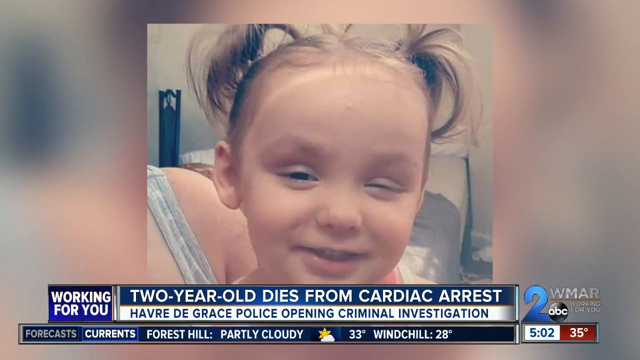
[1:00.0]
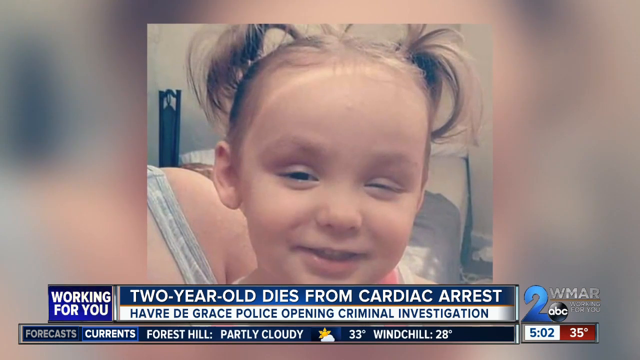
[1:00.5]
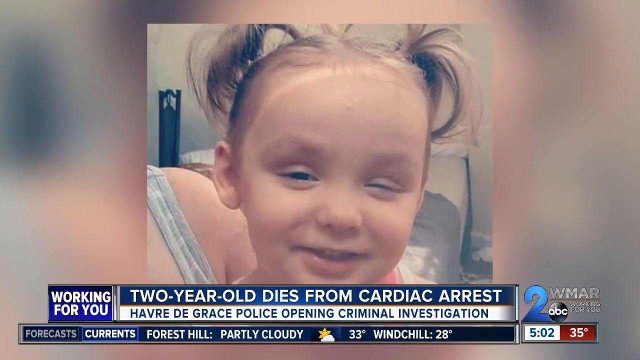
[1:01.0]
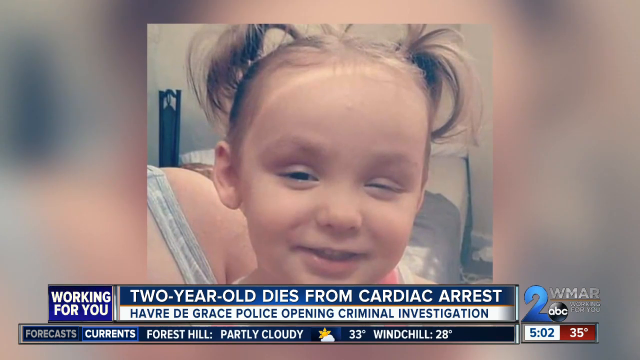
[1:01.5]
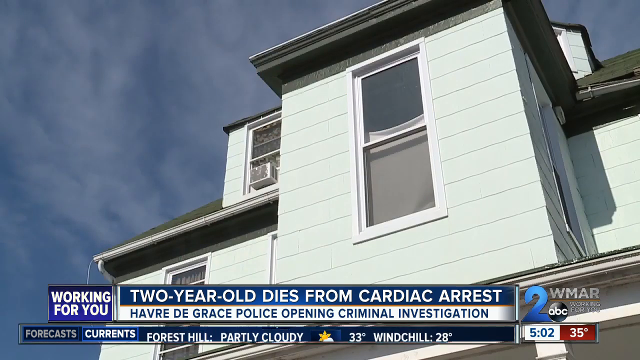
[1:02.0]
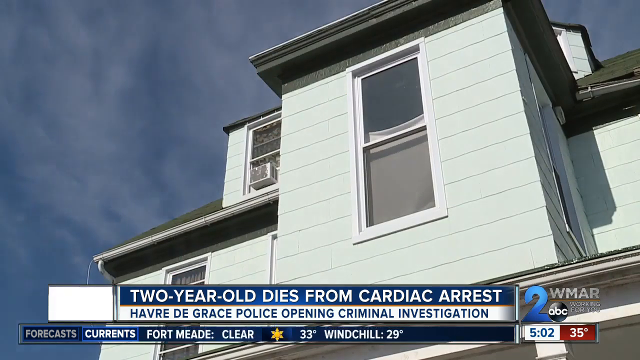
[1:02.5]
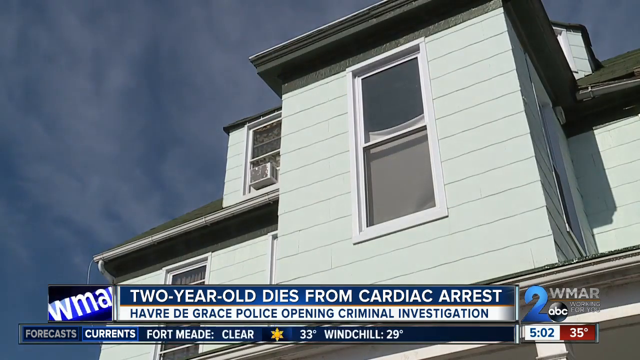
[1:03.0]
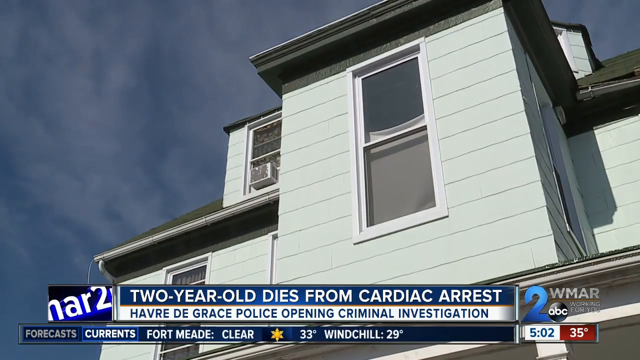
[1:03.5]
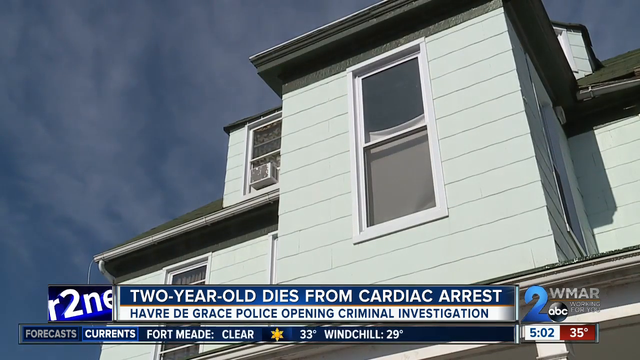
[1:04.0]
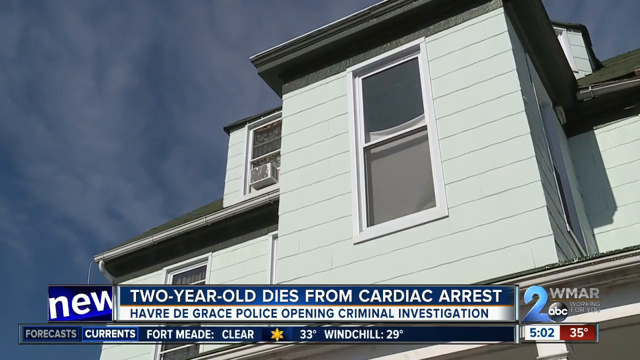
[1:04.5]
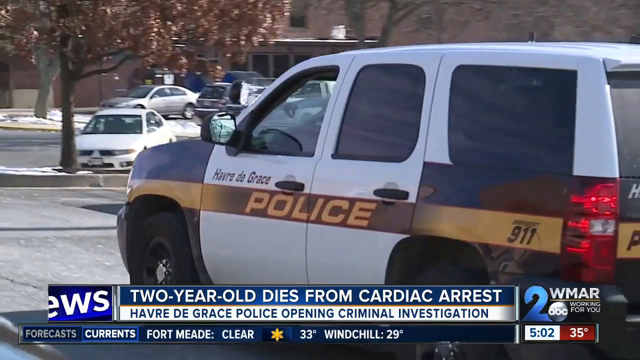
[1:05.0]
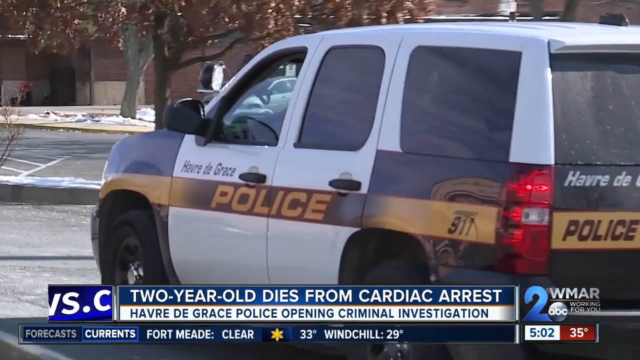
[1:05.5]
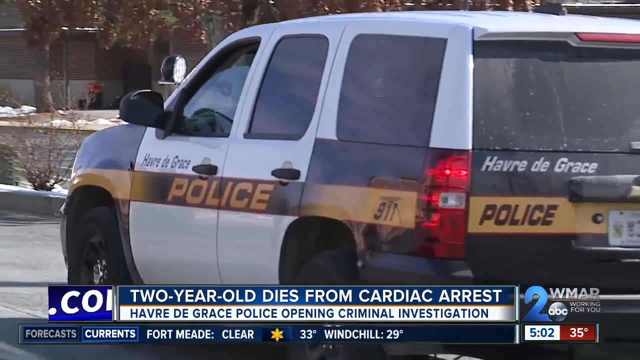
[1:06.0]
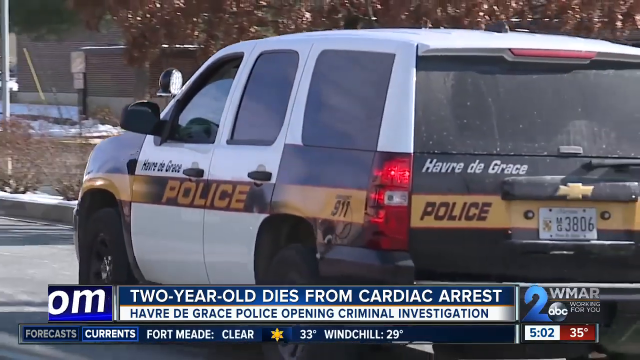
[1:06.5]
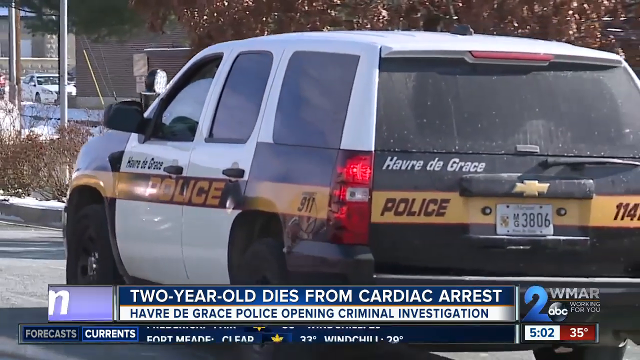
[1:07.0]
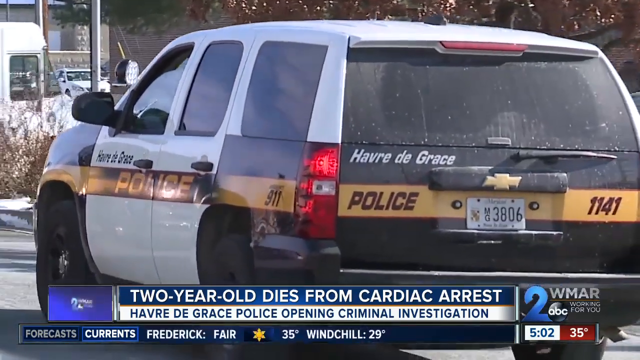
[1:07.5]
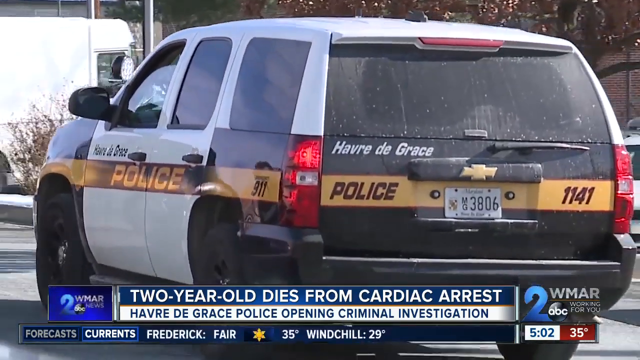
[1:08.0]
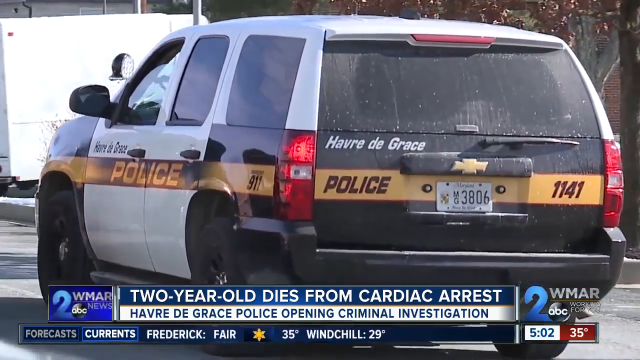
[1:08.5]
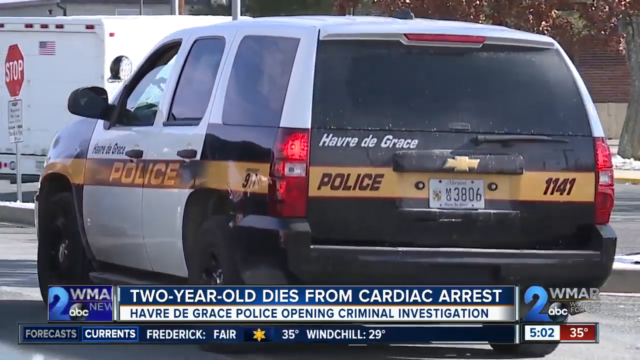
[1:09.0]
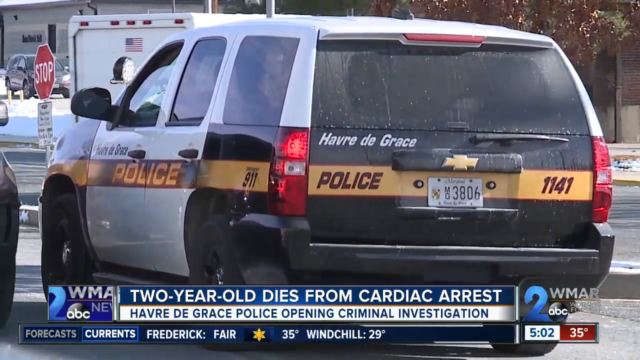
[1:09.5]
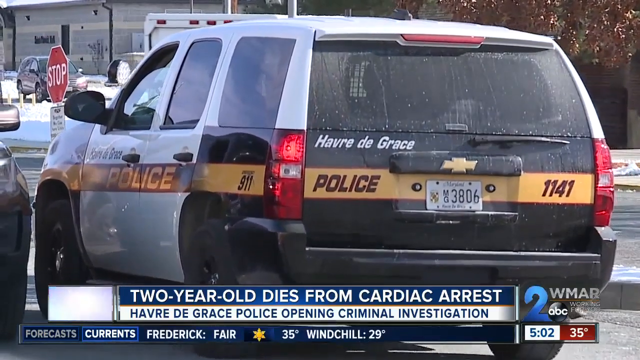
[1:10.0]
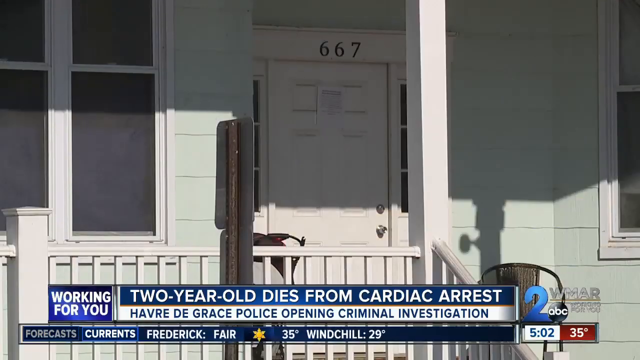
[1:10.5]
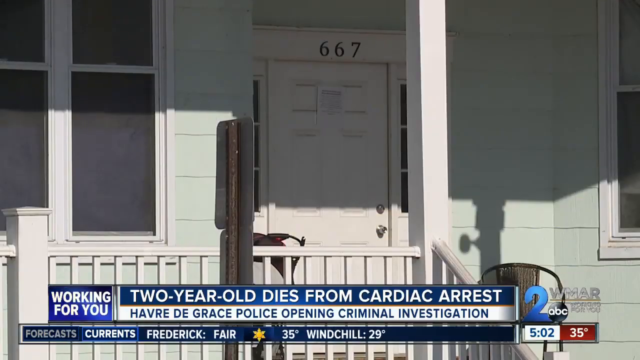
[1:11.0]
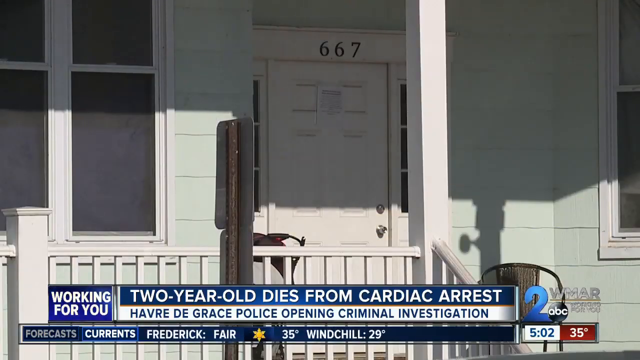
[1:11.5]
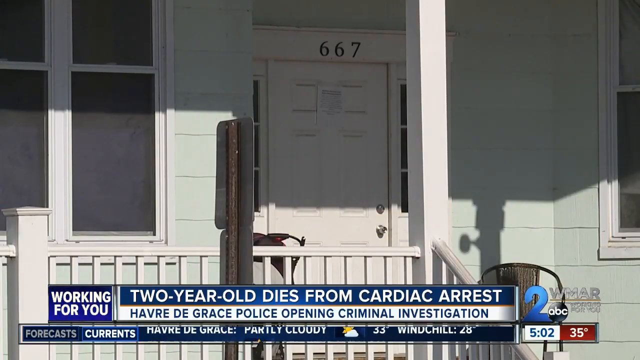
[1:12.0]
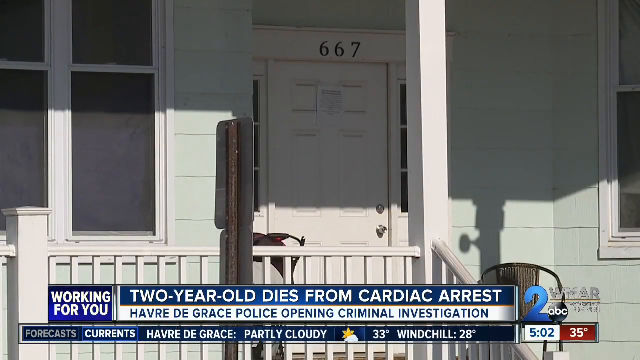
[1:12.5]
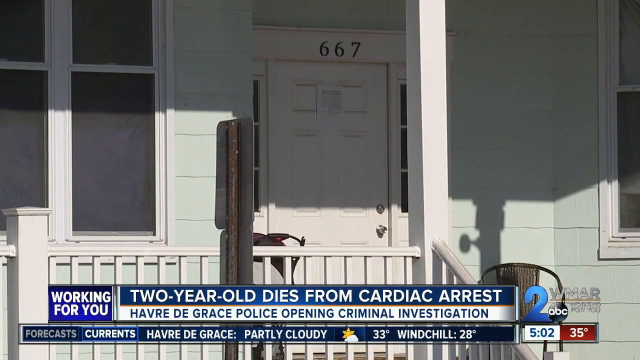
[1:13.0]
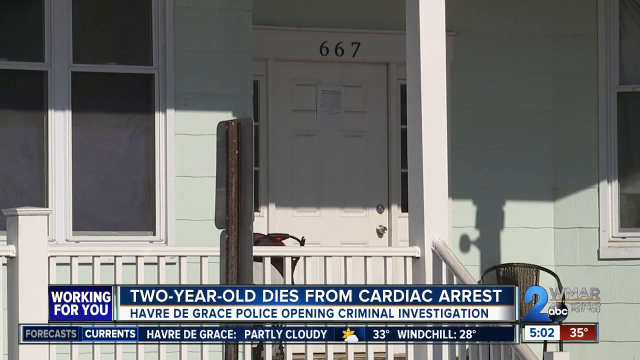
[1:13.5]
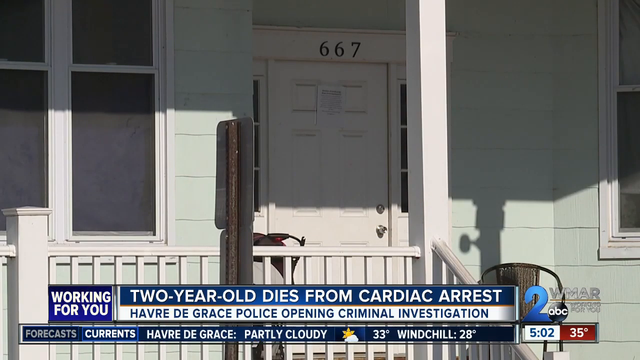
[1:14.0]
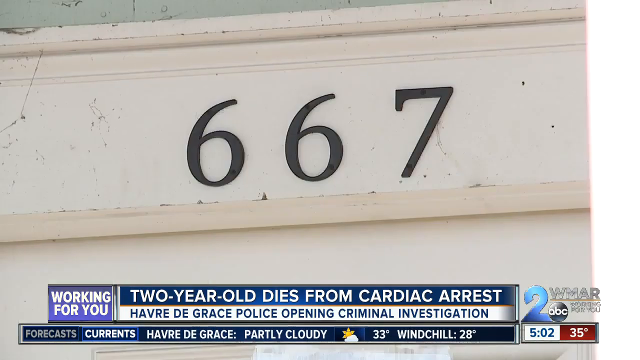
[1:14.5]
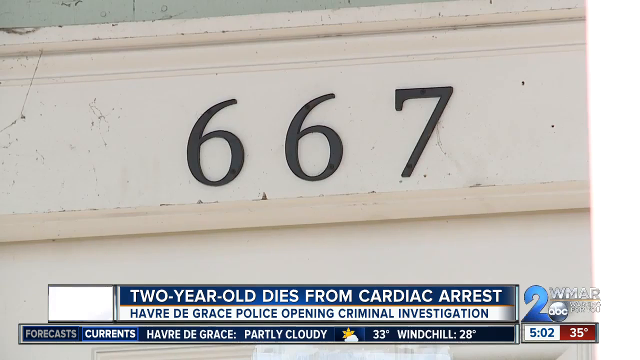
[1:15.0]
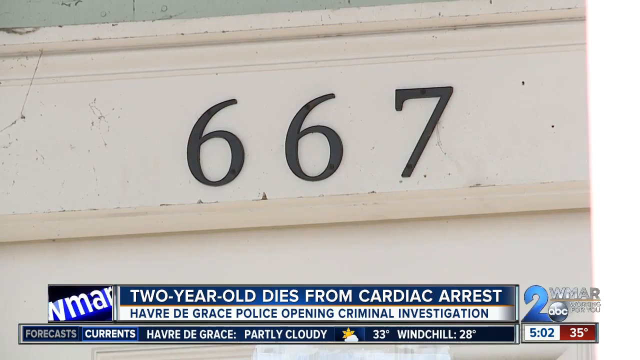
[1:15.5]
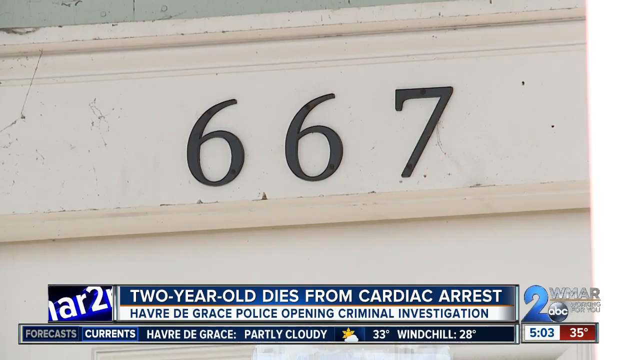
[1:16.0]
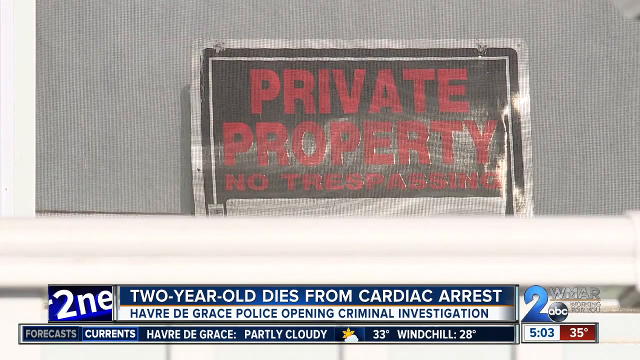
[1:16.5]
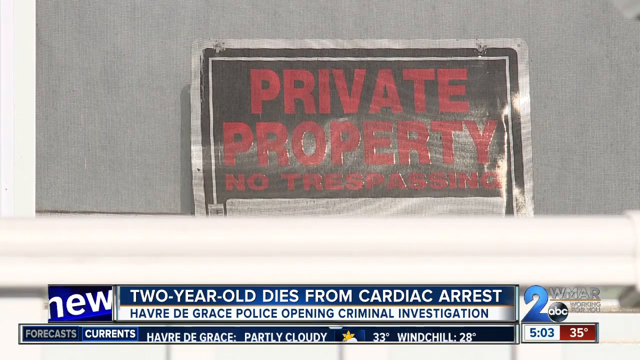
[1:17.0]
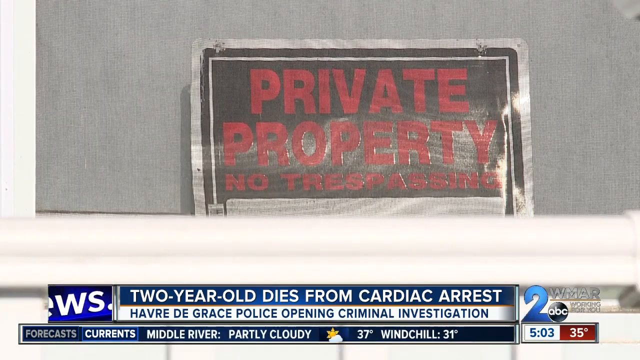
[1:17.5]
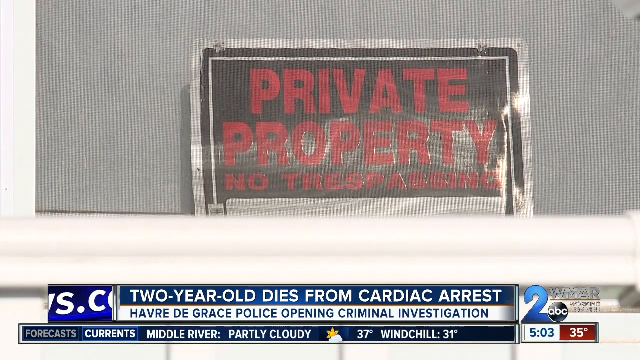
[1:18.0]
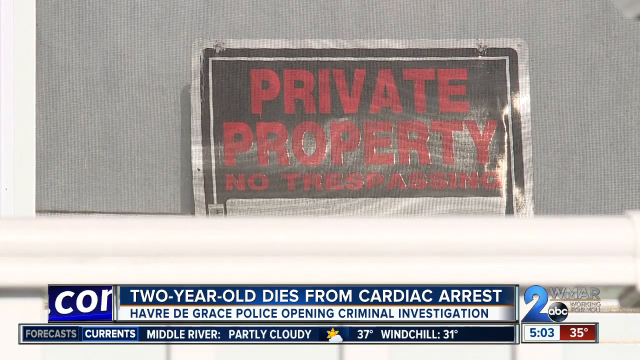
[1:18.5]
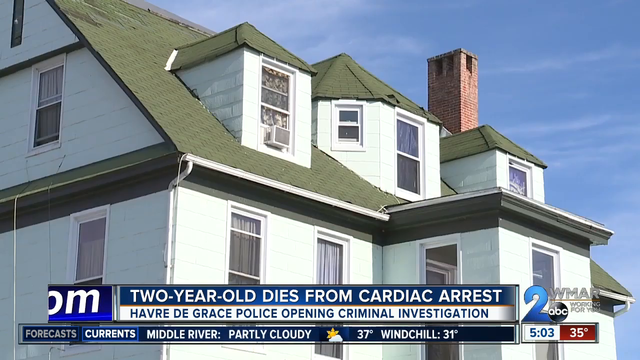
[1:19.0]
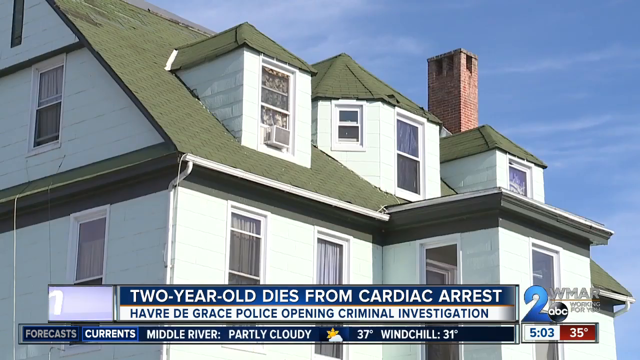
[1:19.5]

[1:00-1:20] A picture of a little girl is on the screen with the text "two year old dies from cardiac arrest" and a caption about Harvey Day Grace police opening a criminal investigation, with the Channel 2 News, Channel 2 ABC branding. Weather scrolls at the bottom of the screen. A house is shown, apparently where the little girl lived; it looks like a three-story house. Police units travel along the street. Then a door numbered 667-something is shown, possibly where she lived, with a sign reading "private property, no trespassing."